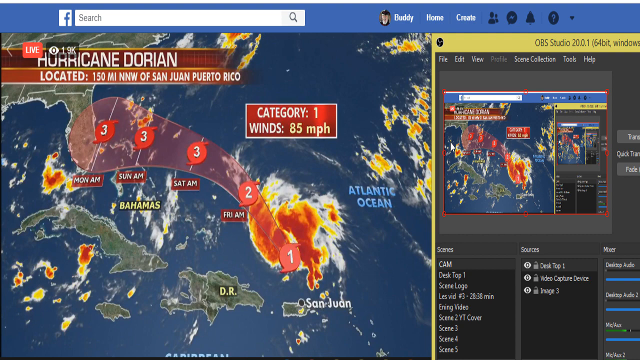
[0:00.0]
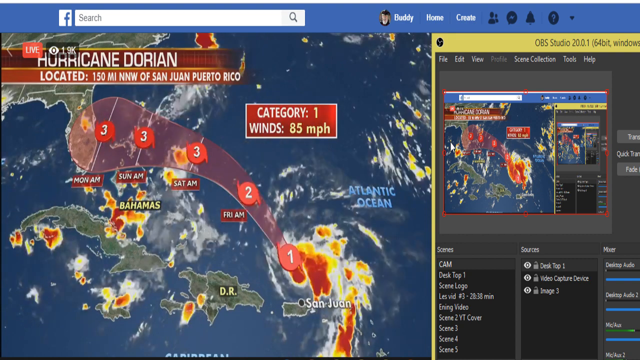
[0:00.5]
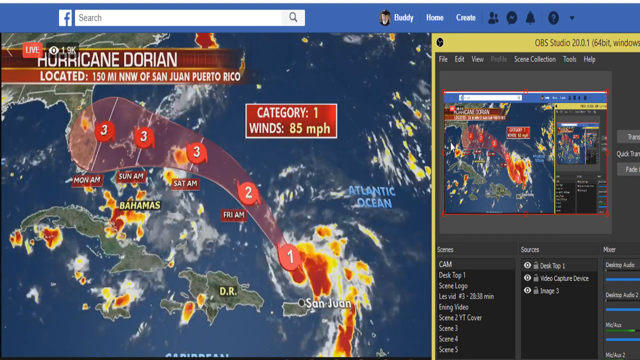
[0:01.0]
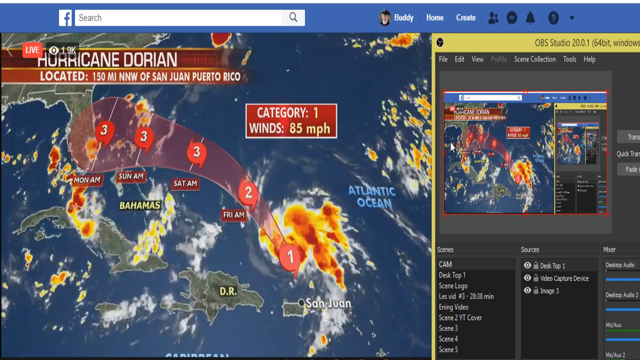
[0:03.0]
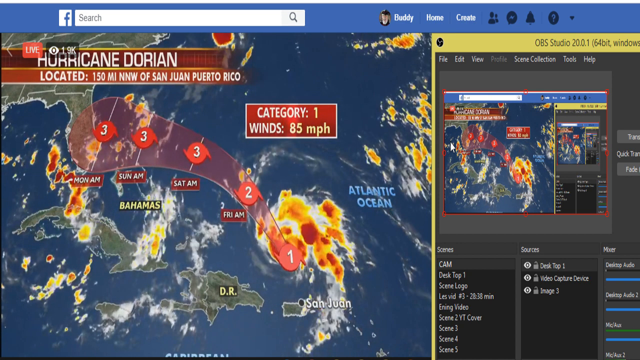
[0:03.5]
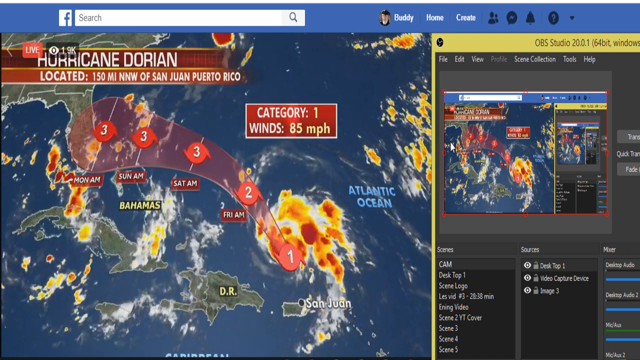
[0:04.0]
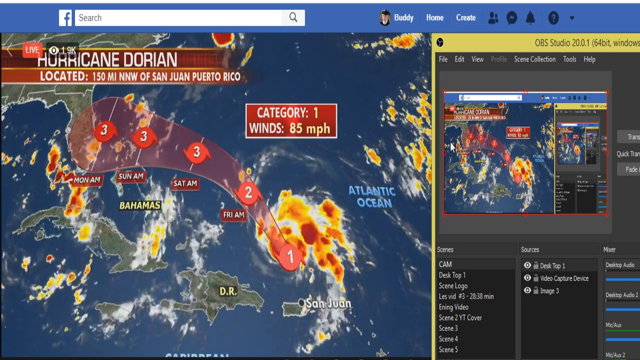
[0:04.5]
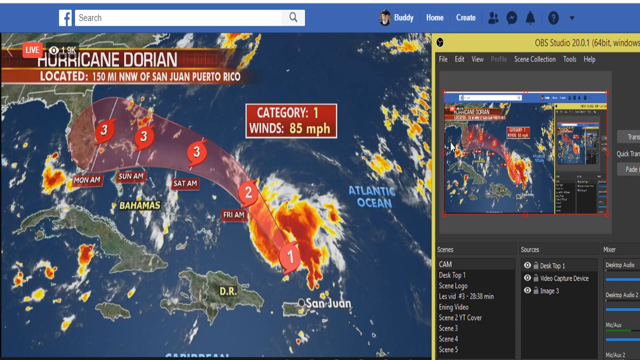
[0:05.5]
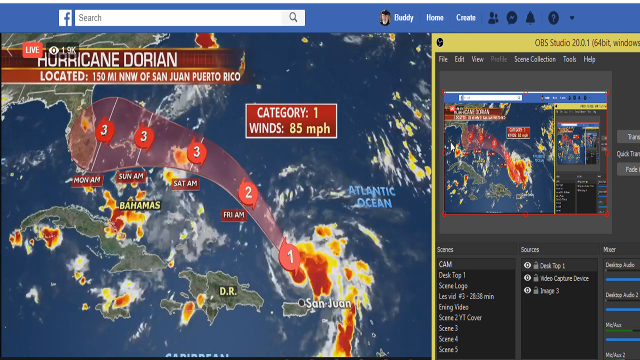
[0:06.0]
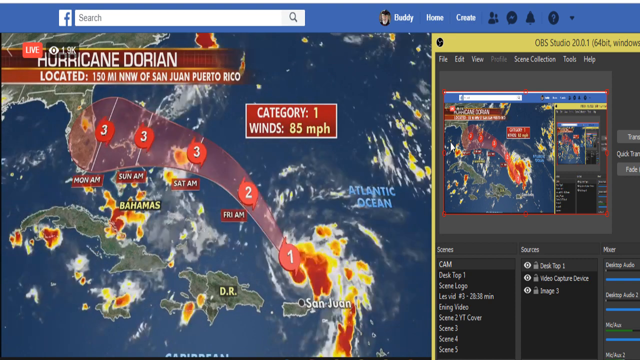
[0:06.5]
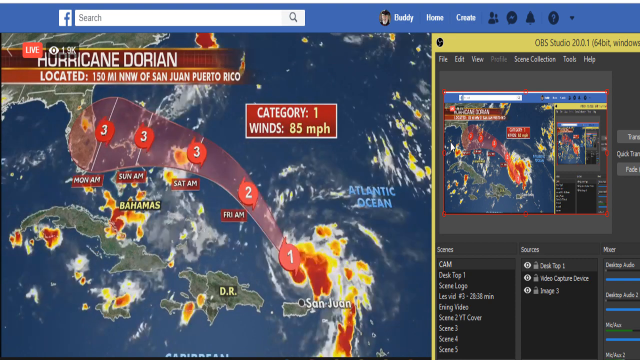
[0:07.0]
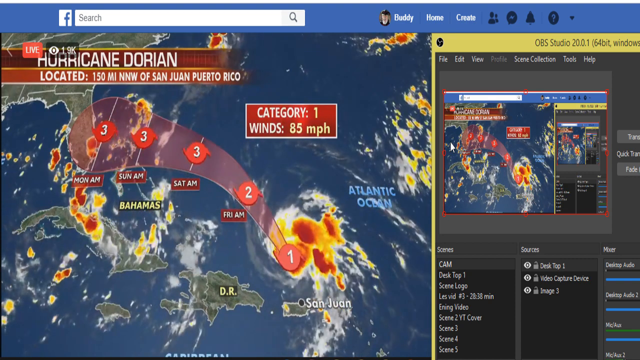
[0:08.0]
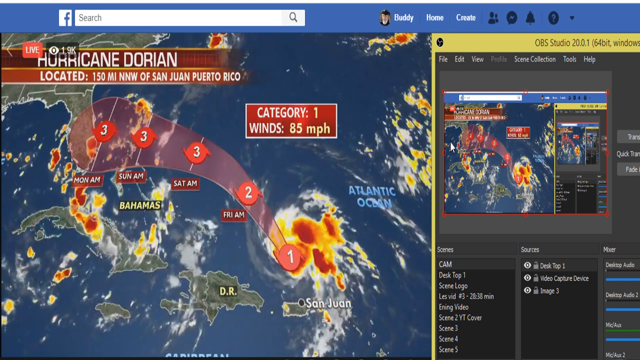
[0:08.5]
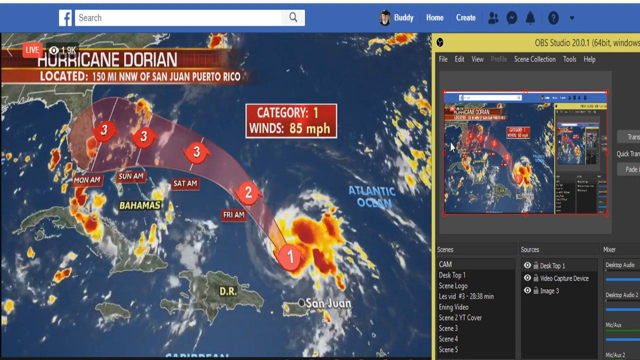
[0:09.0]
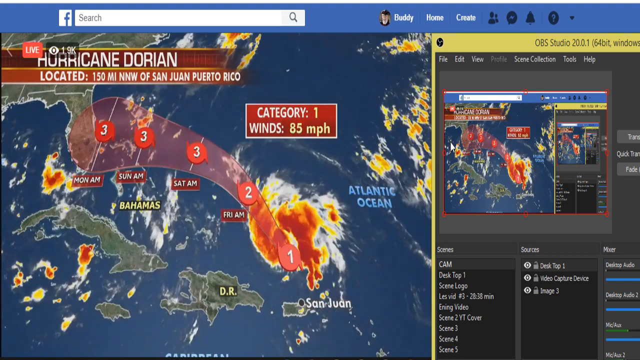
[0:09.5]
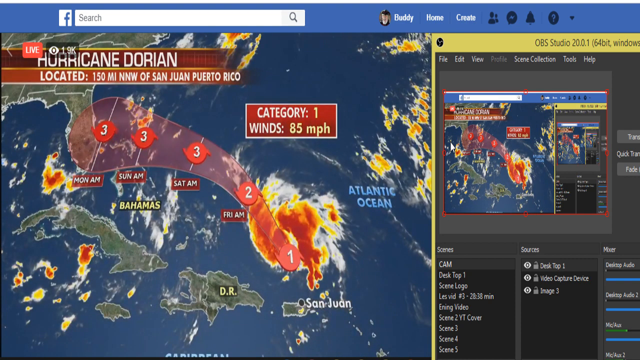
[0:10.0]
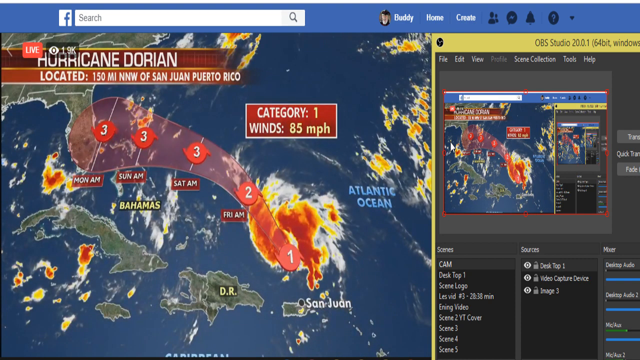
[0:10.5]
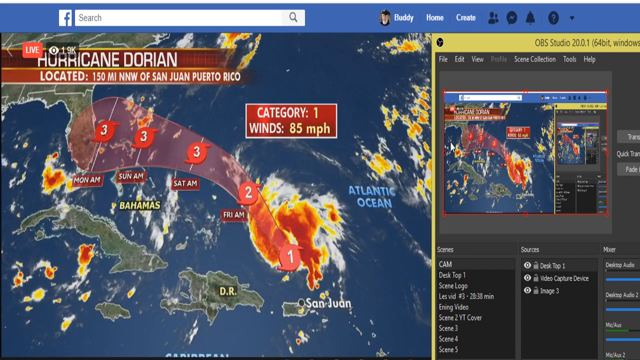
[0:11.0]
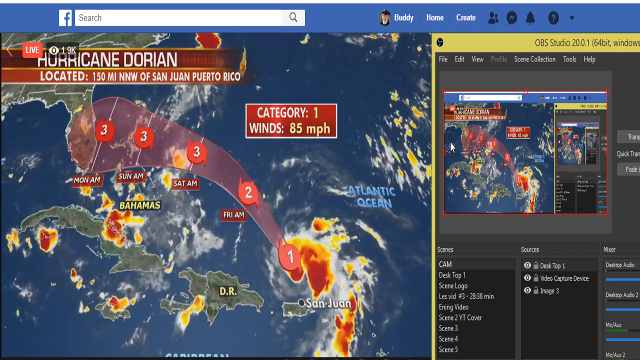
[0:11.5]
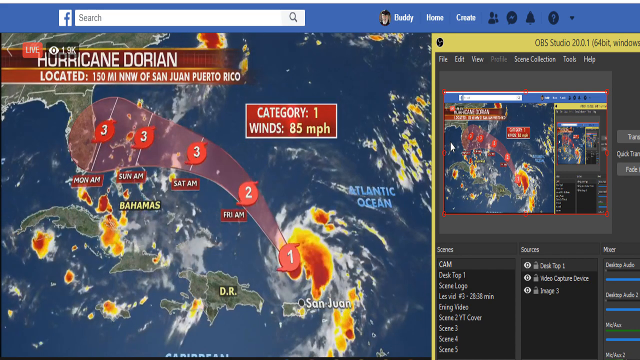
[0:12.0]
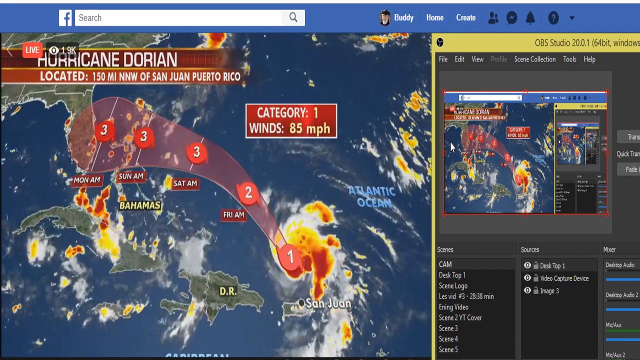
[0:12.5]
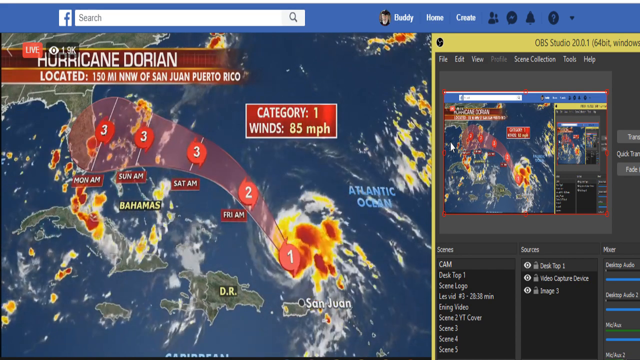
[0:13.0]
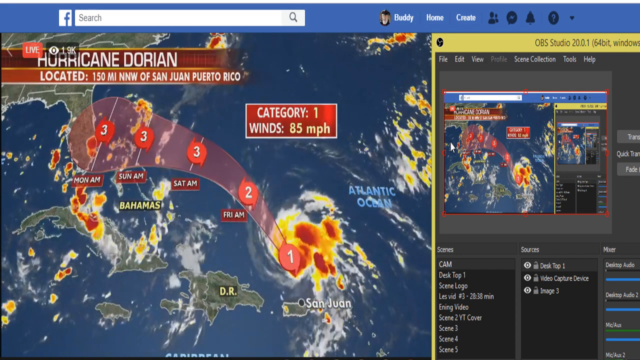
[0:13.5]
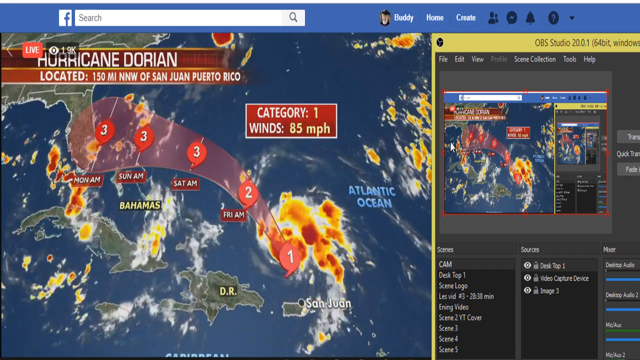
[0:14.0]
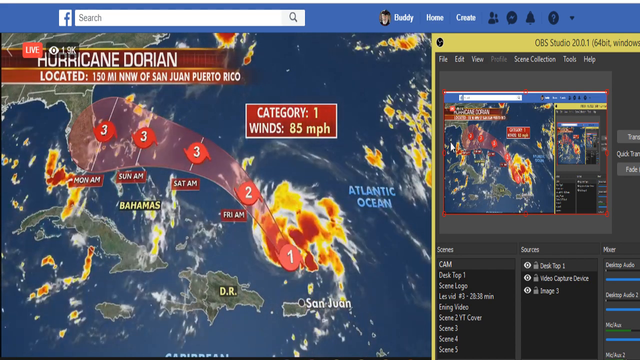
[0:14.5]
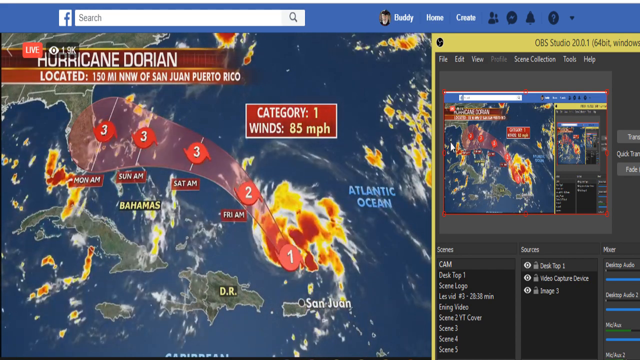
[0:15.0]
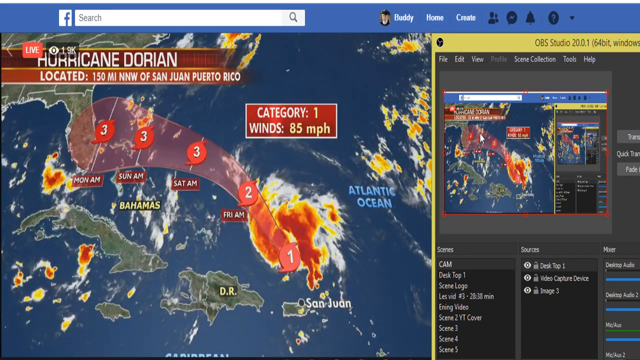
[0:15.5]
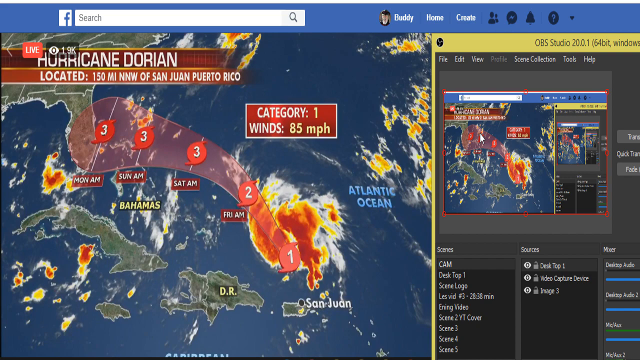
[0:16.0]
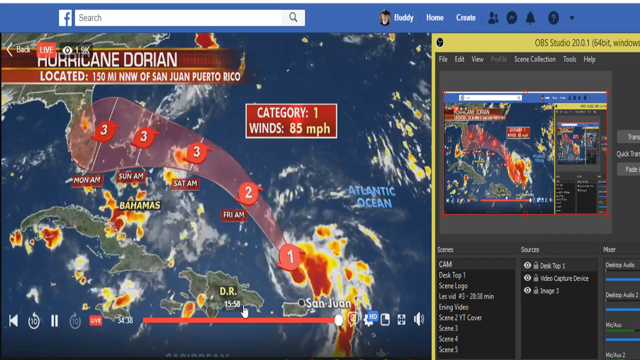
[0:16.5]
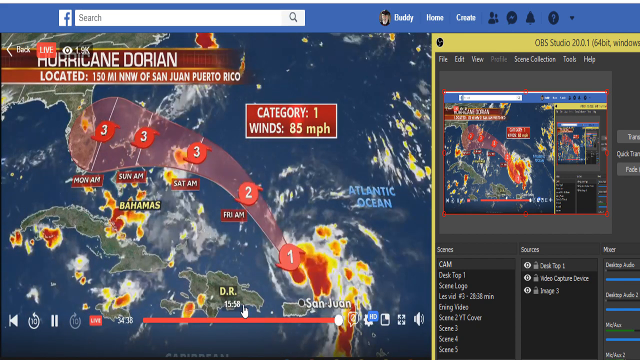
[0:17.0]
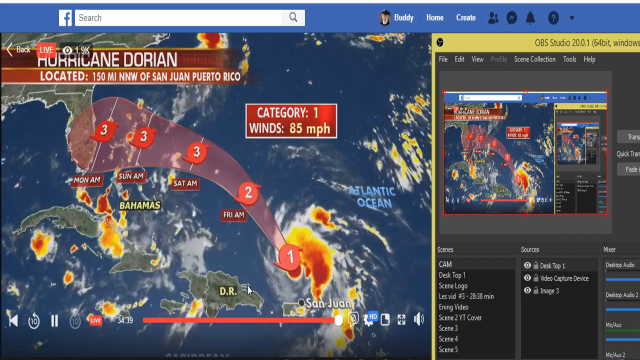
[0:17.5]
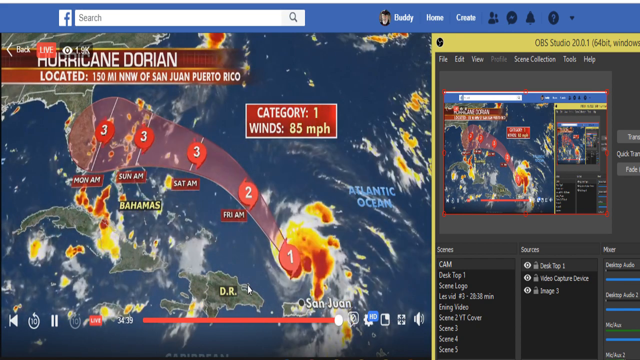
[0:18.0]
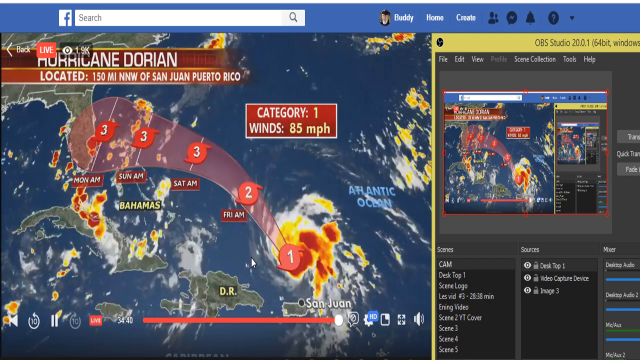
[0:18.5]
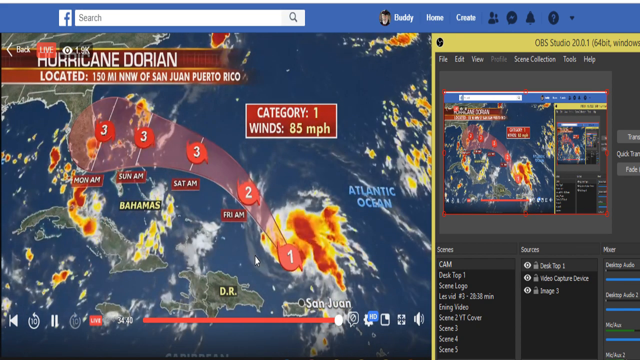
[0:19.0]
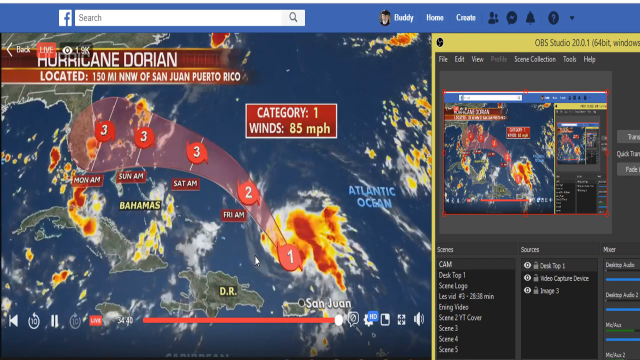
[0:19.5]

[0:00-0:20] What appears to be a Facebook page fills the view, with the Facebook bar across the top: the Facebook logo, a search bar, and a profile page whose name looks like Buddy, plus home, create, friend request, messenger, notification and help buttons along the very top bar. Below is a map of the Bahamas. On the left side is what looks to be a live stream of Hurricane Dorian showing something like a weather map, with red sort of highlighting where the wind is, where the hurricane is and how it is moving. The right side seems to have a studio look, with "OBS Studio 20.0.1" at the top. A red box says "category one winds 85 miles per hour", and the top left says "Hurricane Dorian located 150 miles north northwest of San Juan, Puerto Rico".